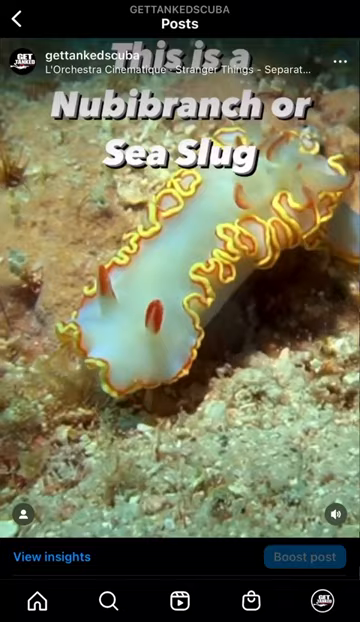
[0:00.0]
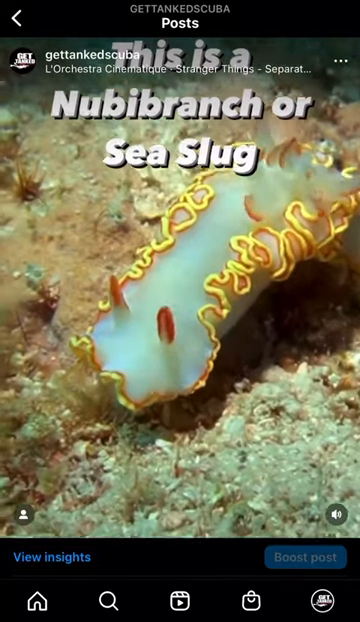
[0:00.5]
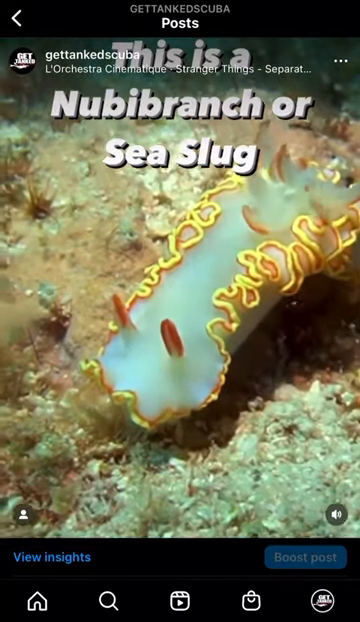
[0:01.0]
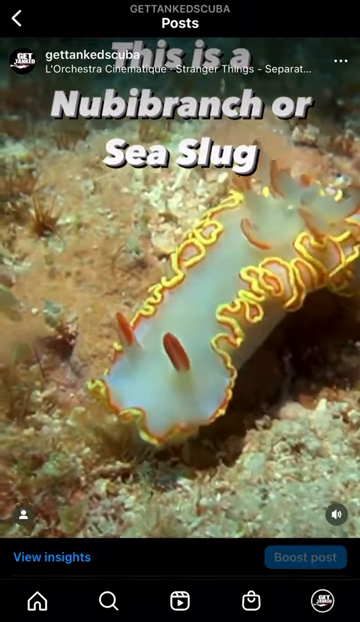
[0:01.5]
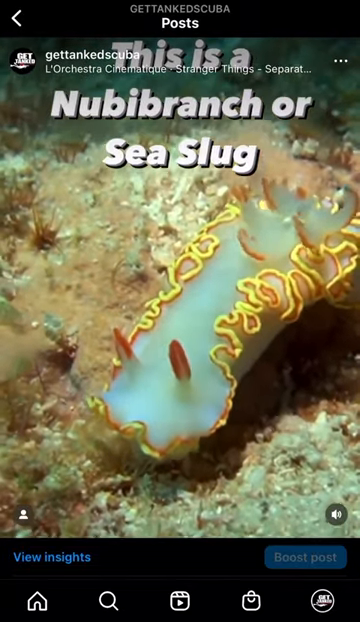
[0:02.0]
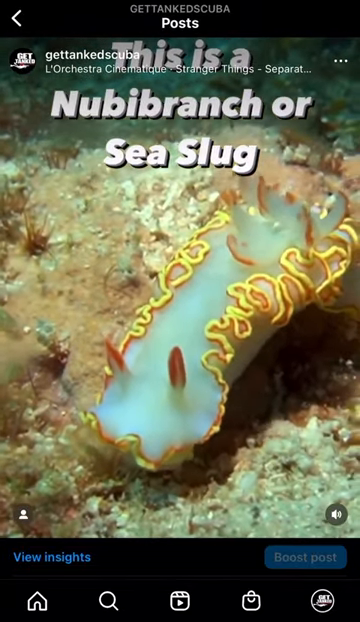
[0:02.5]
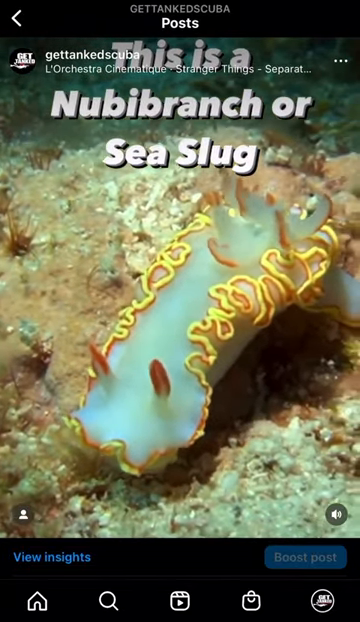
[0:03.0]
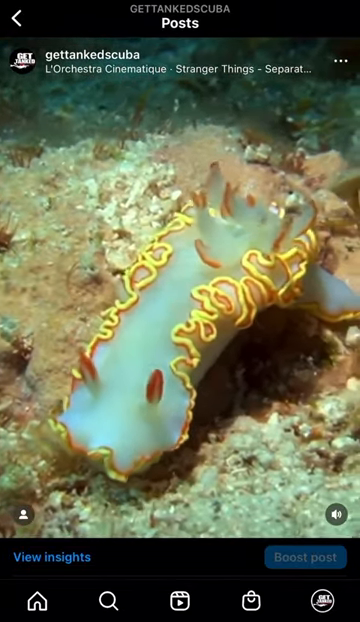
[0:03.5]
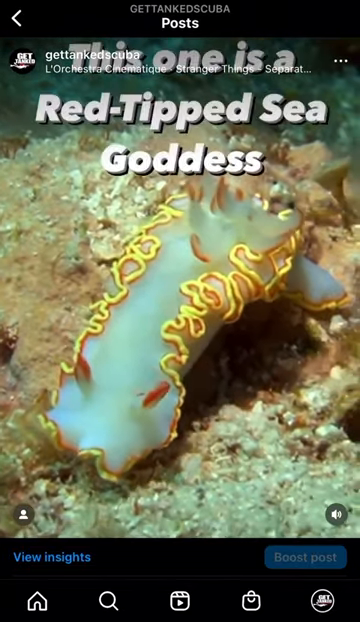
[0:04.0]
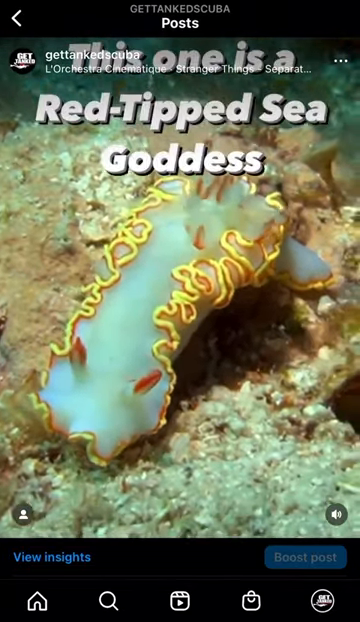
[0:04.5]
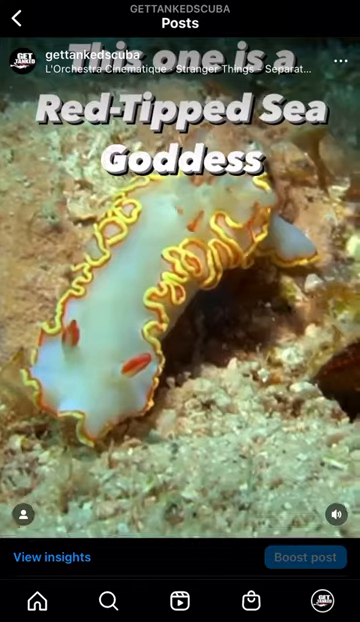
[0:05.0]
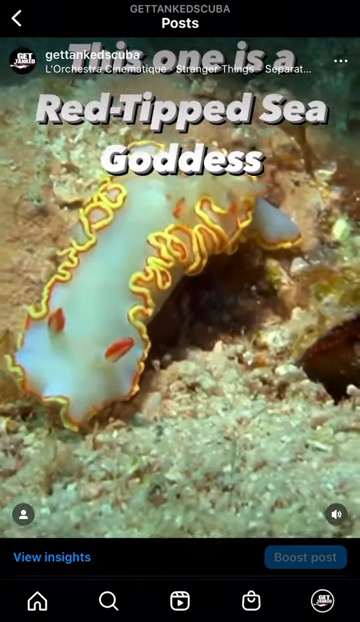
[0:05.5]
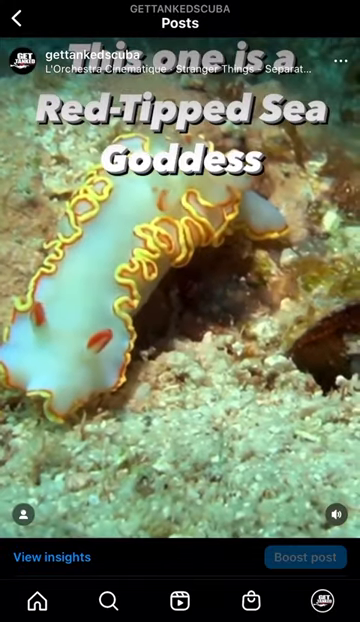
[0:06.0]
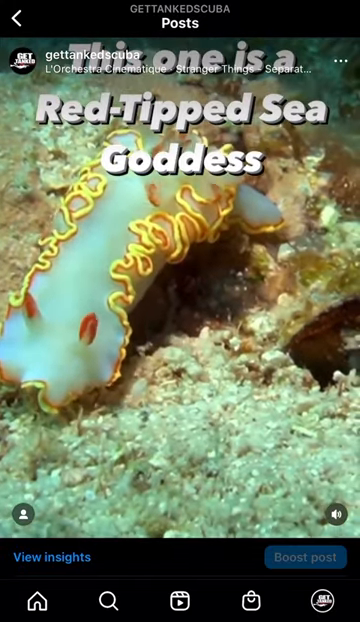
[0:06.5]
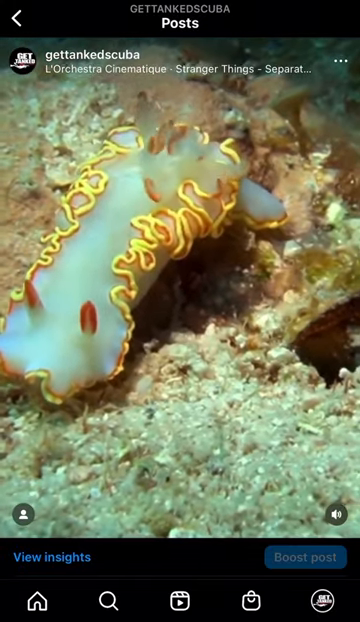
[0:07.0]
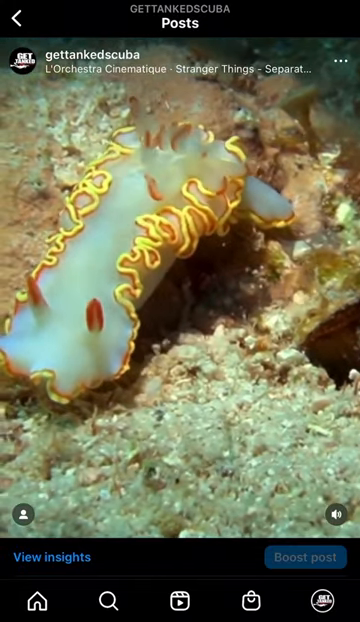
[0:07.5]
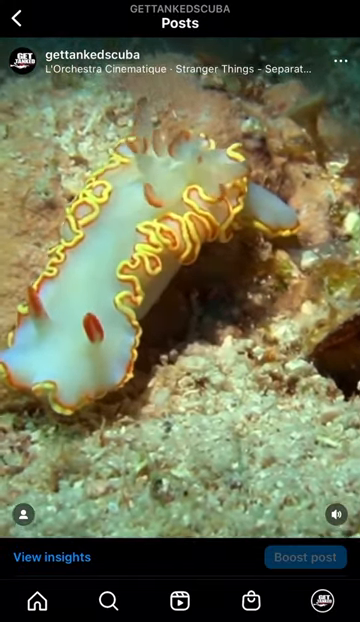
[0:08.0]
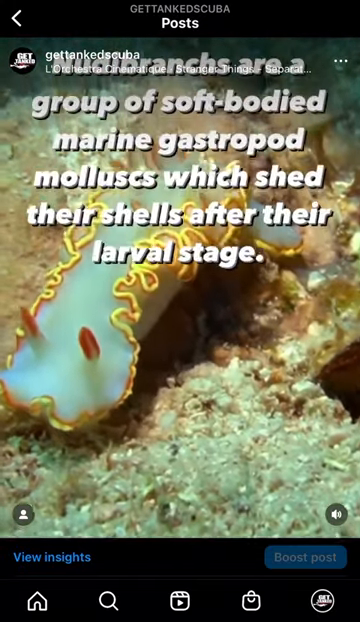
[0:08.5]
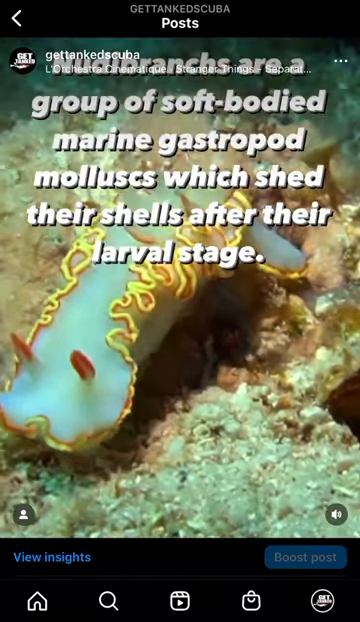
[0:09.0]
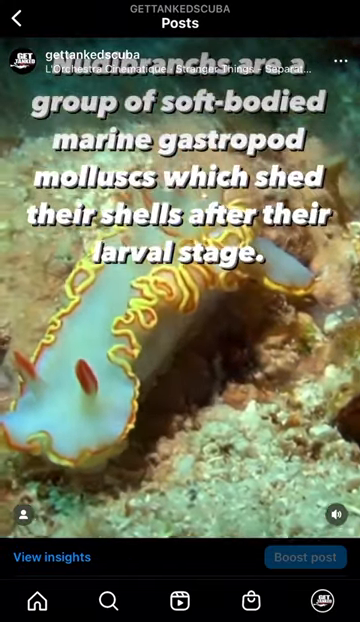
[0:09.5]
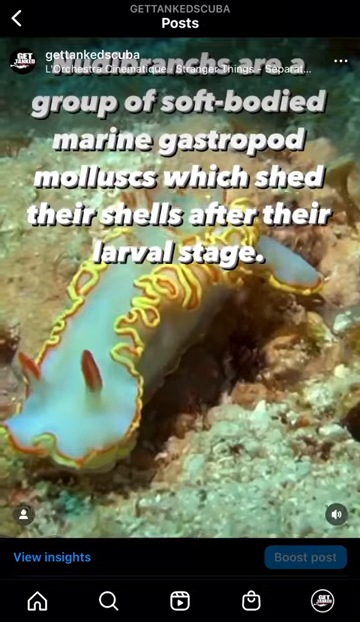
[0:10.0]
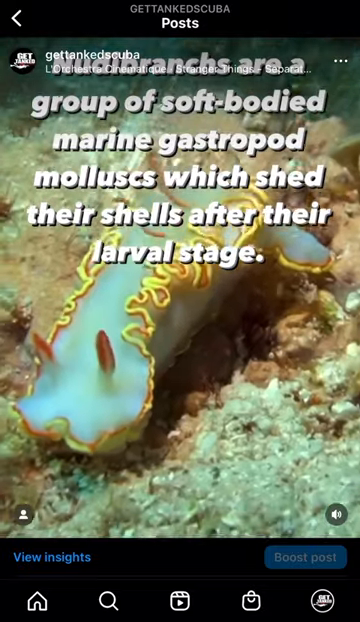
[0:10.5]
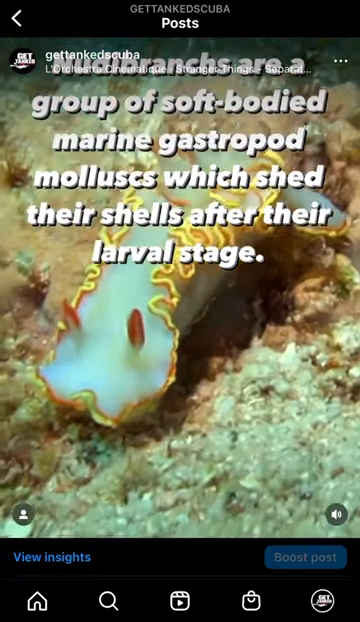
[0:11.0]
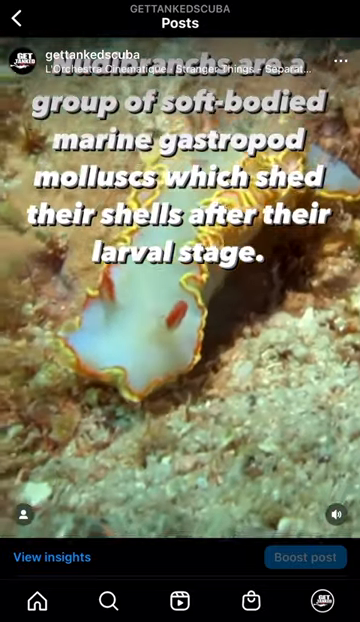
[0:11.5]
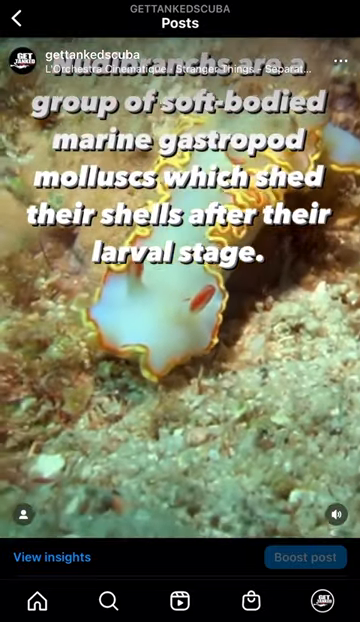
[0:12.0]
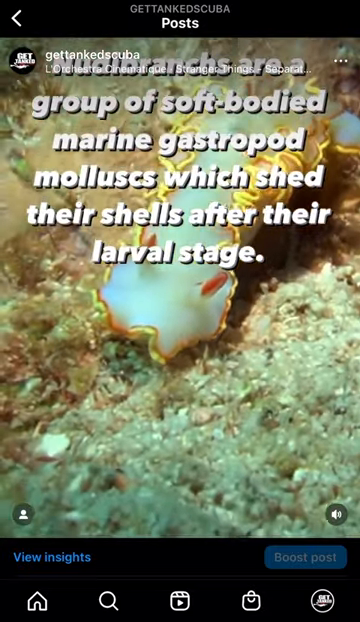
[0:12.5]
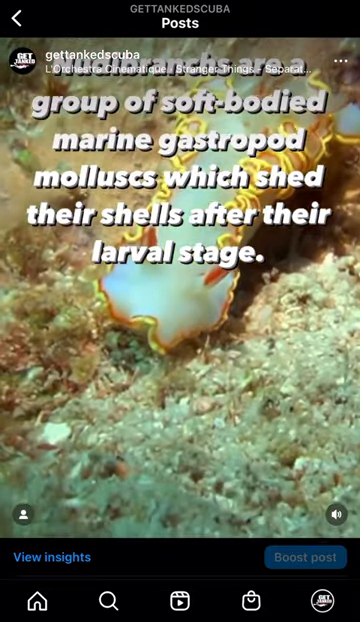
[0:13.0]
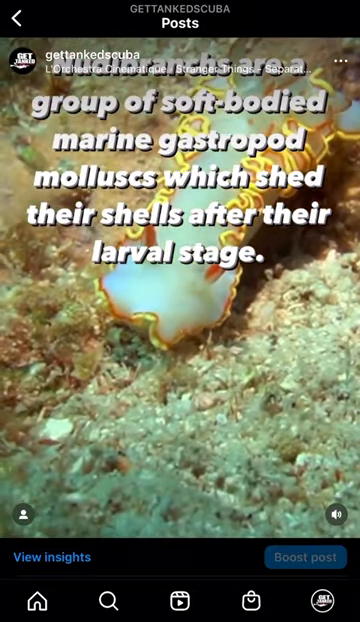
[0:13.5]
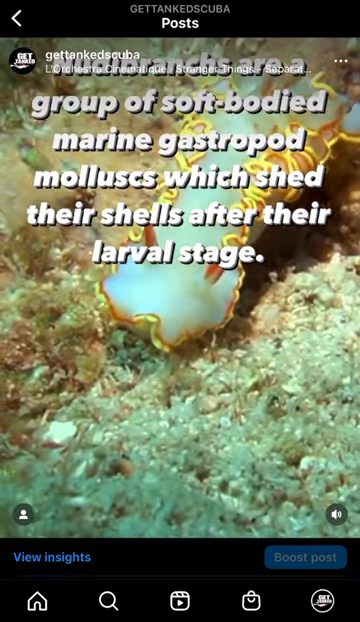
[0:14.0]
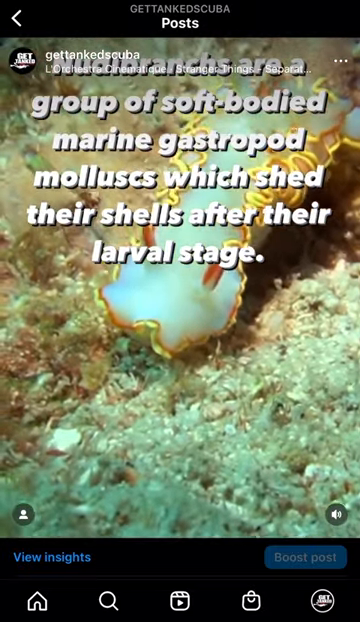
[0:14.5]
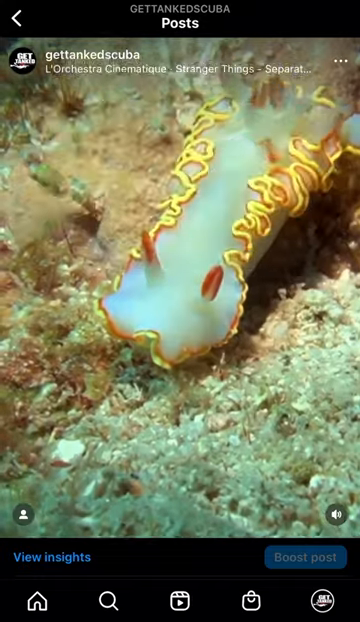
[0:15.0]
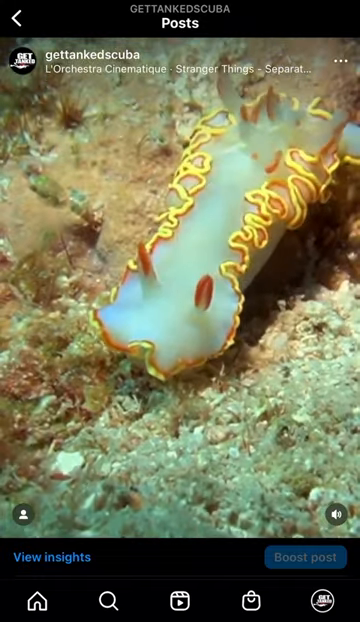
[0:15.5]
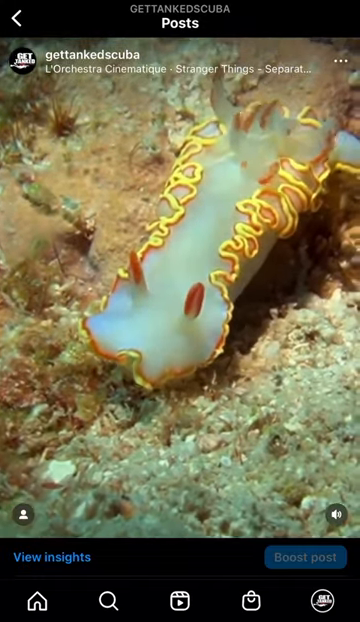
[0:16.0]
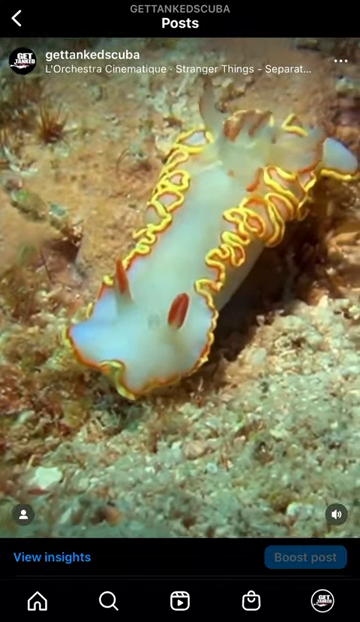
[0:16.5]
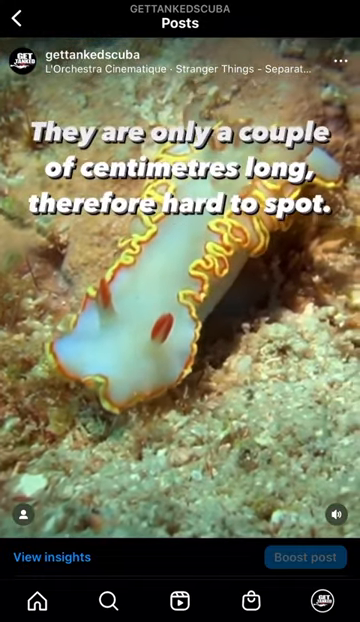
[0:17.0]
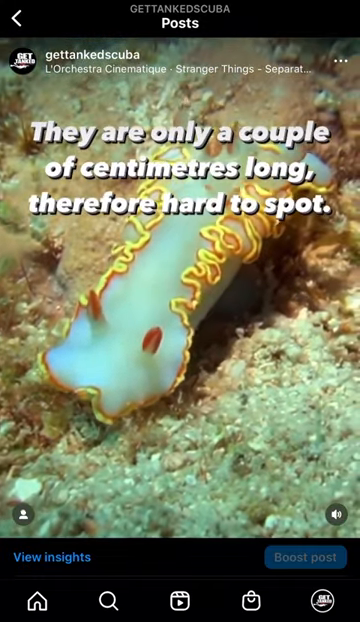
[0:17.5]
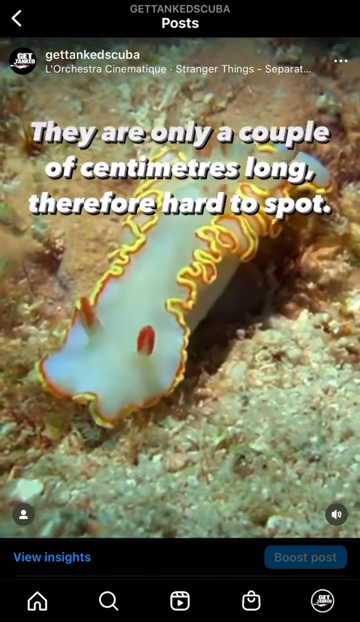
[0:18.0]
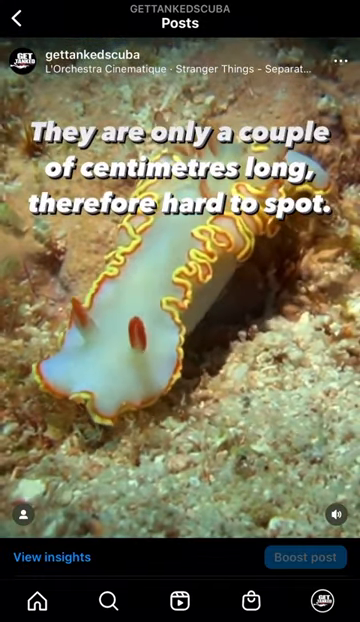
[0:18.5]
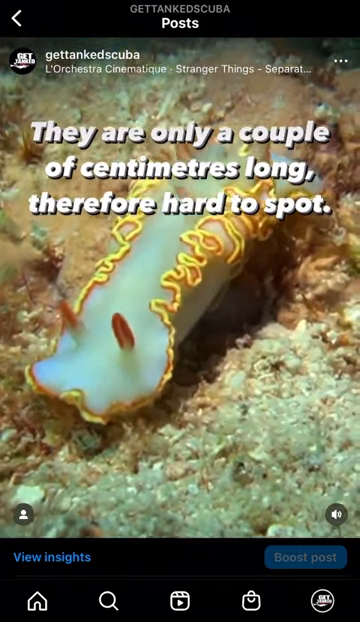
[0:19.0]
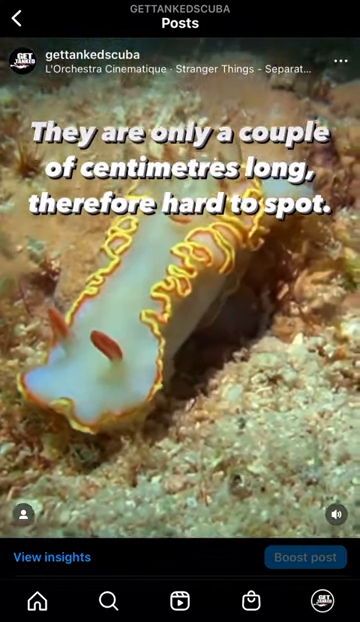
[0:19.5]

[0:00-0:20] What looks like a social media video, potentially from Instagram or TikTok, comes from an account called Get Tanked Scuba. It shows a sea creature that could be either in a tank or in the ocean. White words on the screen say "this is a nudibranch or sea slug." The slug is white, with two horns that have red tips, and the outline of its body is all curled, with a yellow fringe all around it. The video shows the sea slug's movements; it appears to have different protrusions coming out of its body that move. White text reads "nudibranchs are a group of soft-bodied marine gastropod mollusks which shed their shells after their larval stage." The creature looks almost like an upside-down lobster. More words then appear in thick white text: "they are only a couple of centimeters long, therefore hard to spot."